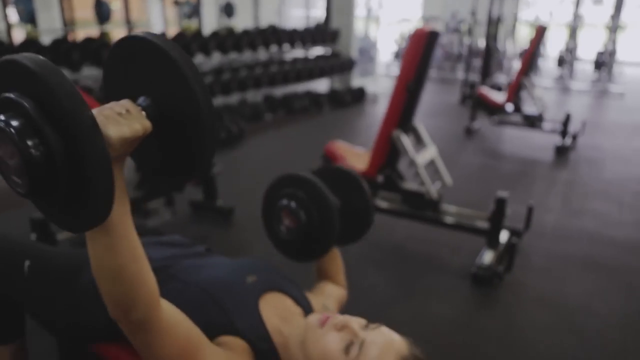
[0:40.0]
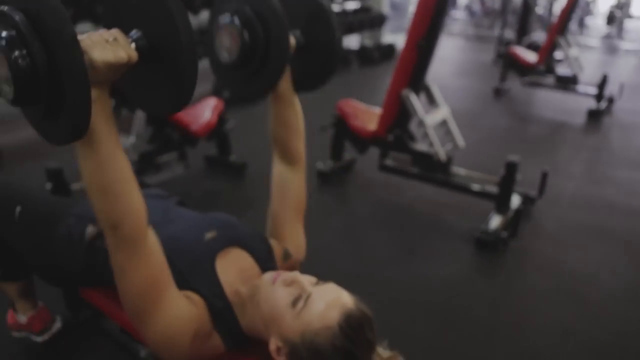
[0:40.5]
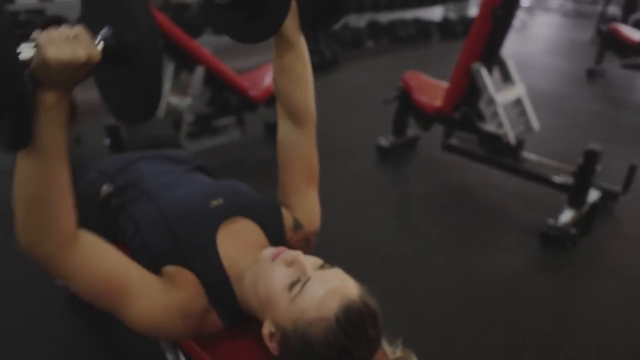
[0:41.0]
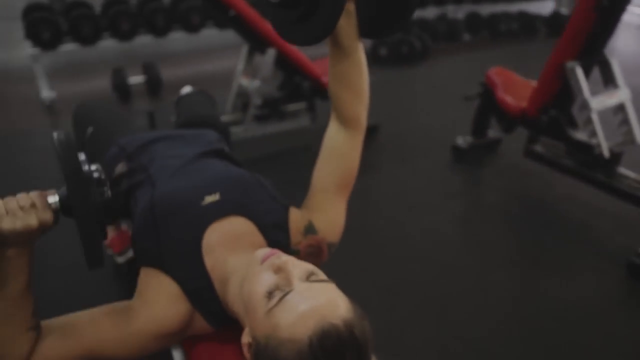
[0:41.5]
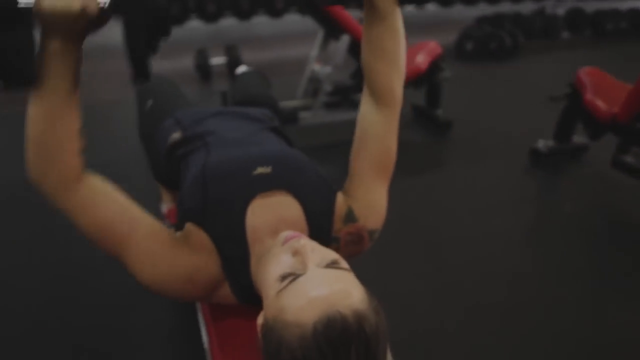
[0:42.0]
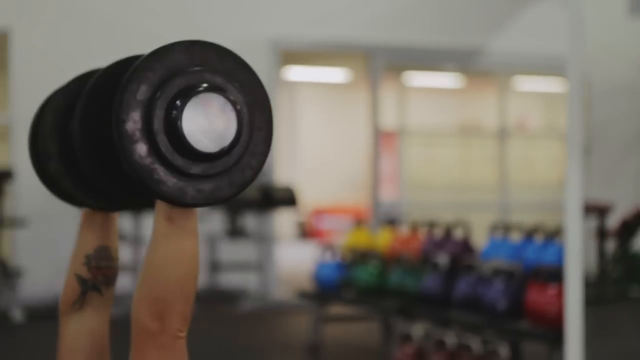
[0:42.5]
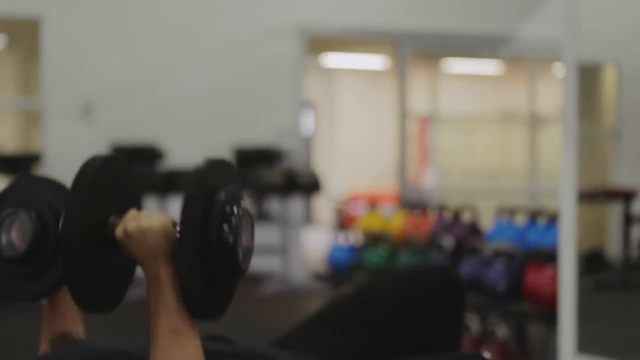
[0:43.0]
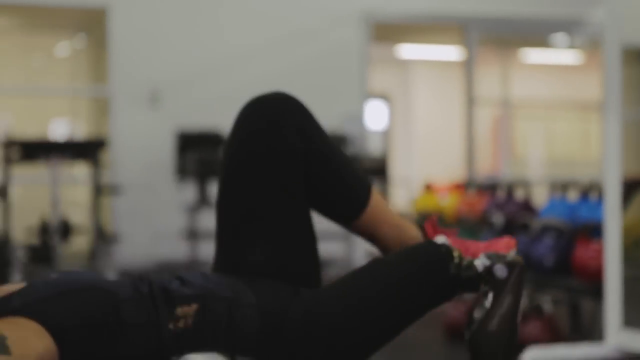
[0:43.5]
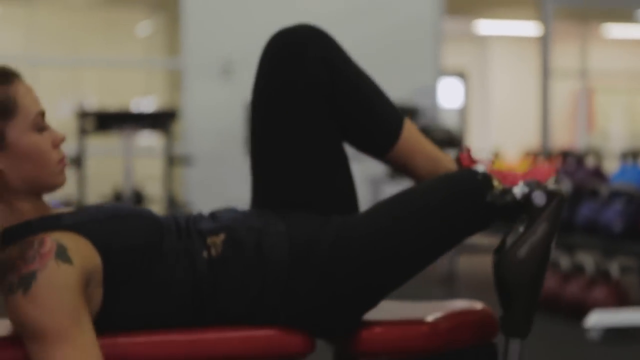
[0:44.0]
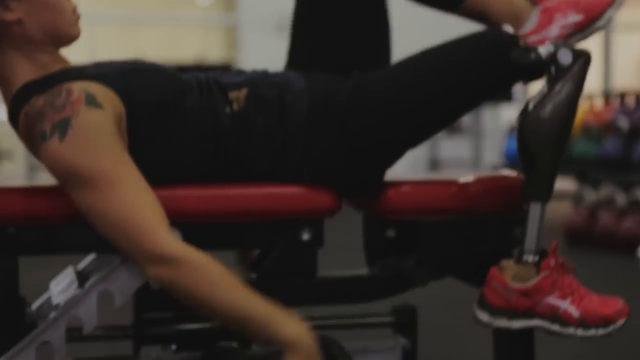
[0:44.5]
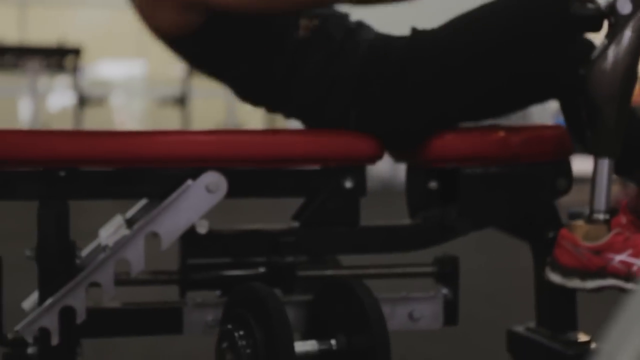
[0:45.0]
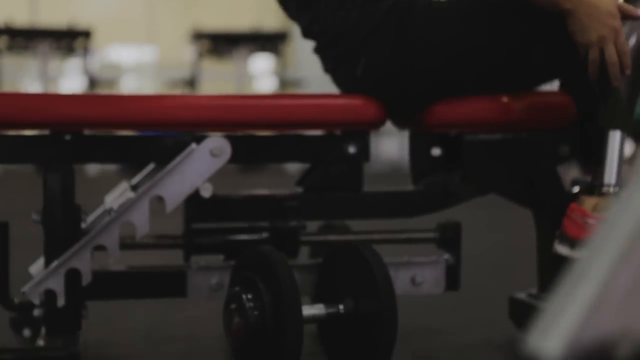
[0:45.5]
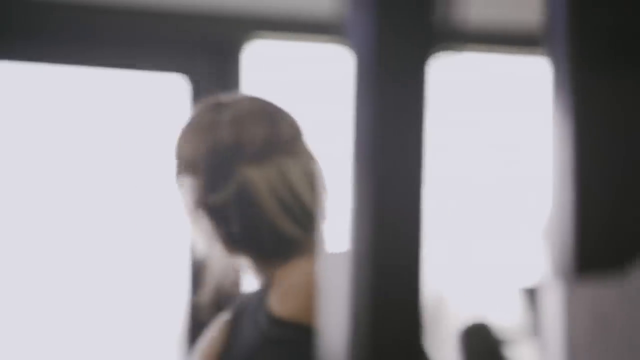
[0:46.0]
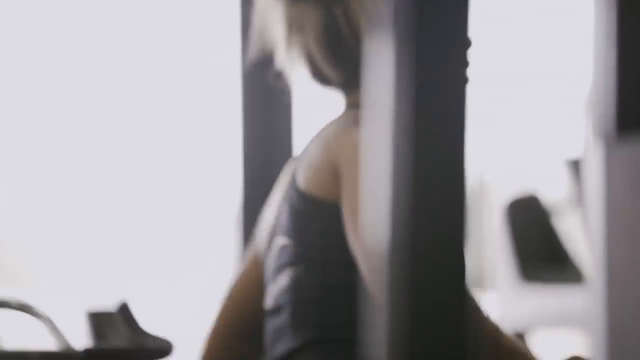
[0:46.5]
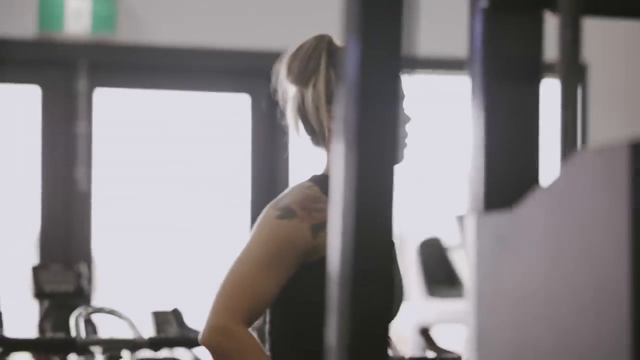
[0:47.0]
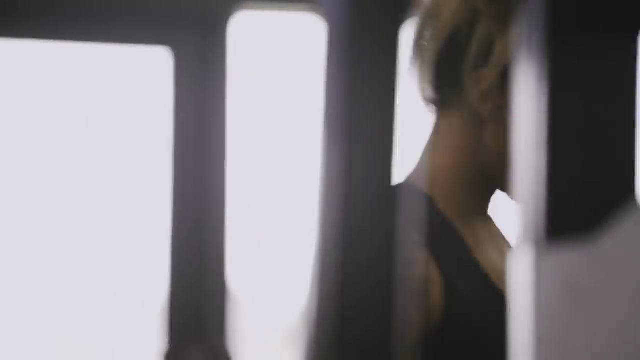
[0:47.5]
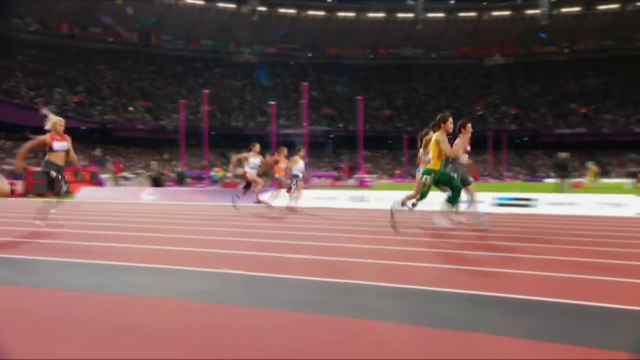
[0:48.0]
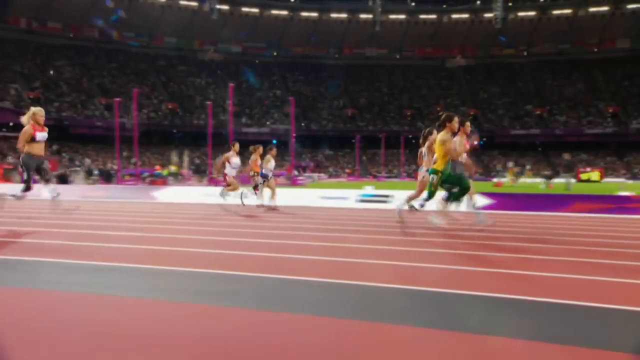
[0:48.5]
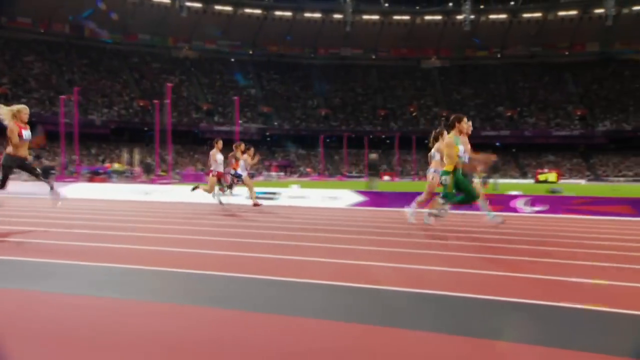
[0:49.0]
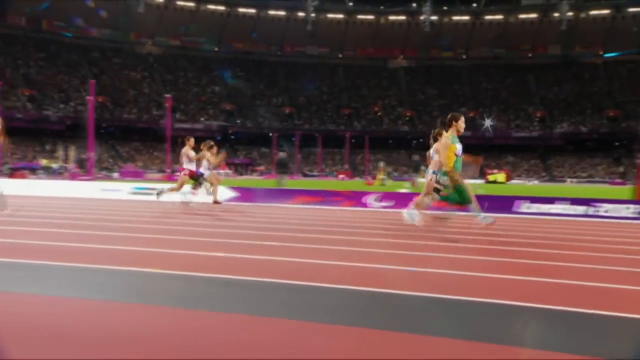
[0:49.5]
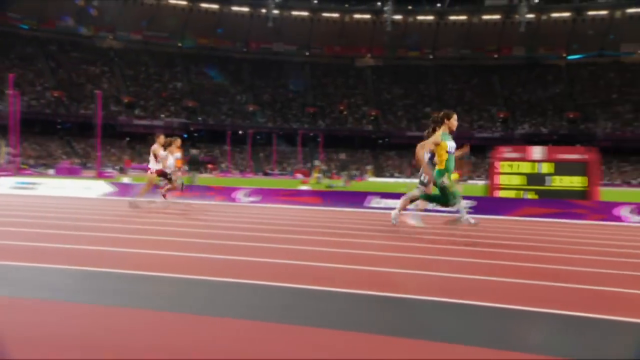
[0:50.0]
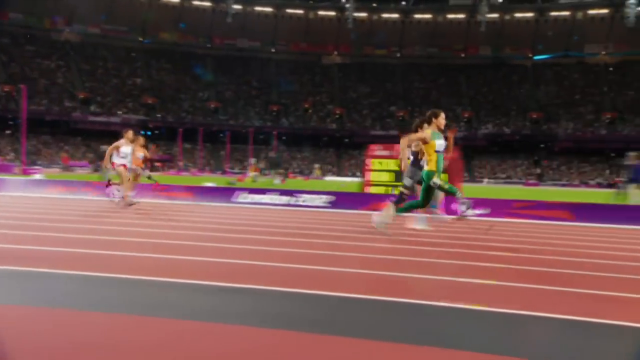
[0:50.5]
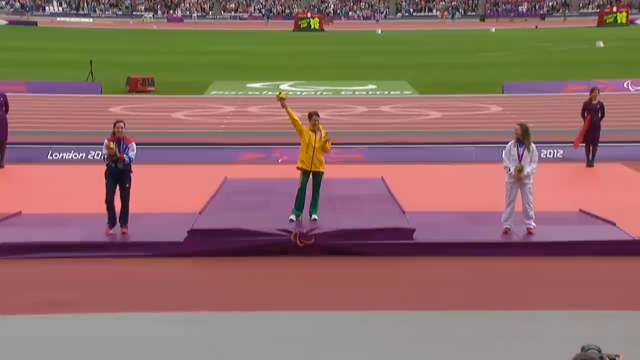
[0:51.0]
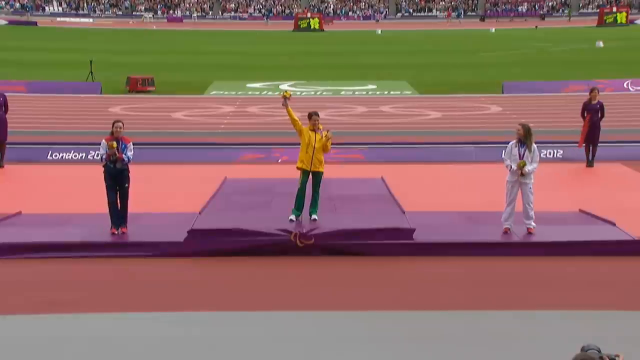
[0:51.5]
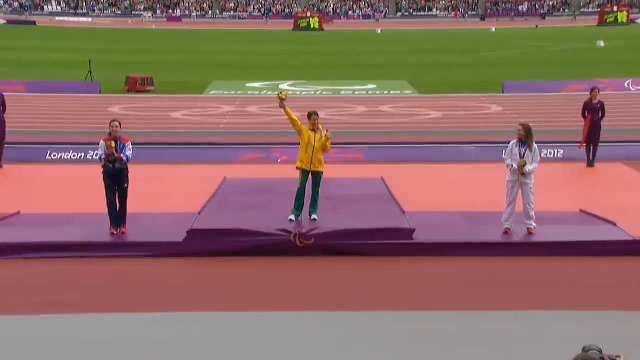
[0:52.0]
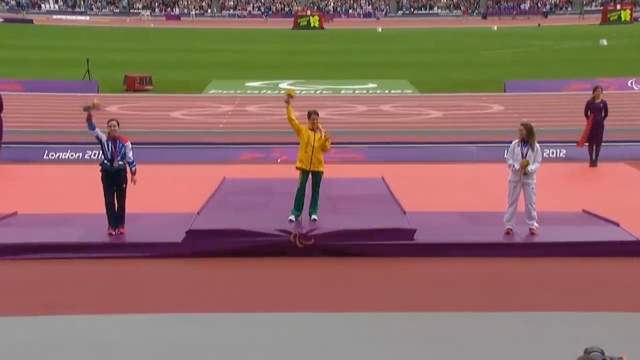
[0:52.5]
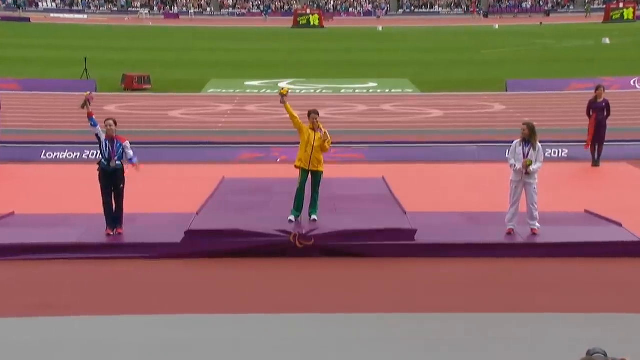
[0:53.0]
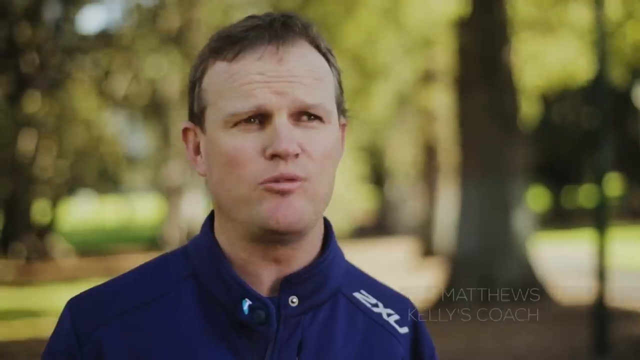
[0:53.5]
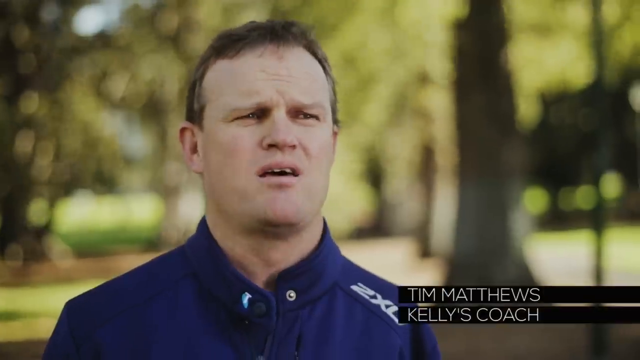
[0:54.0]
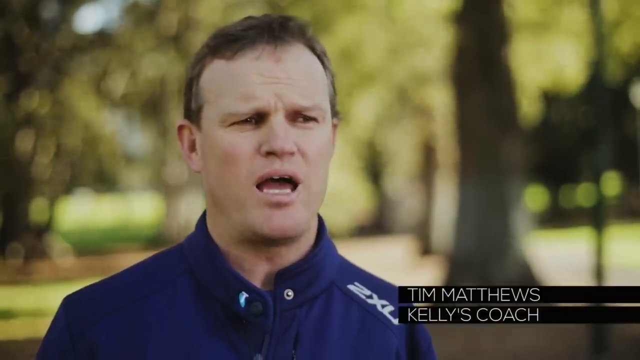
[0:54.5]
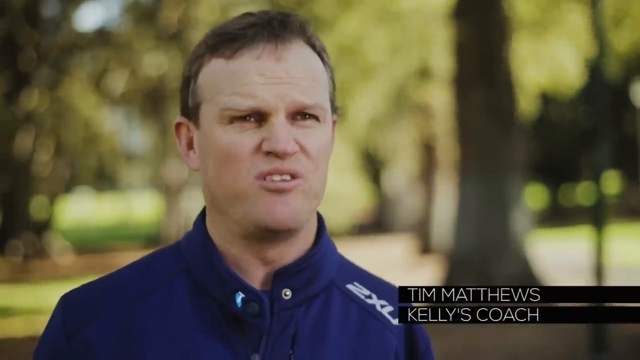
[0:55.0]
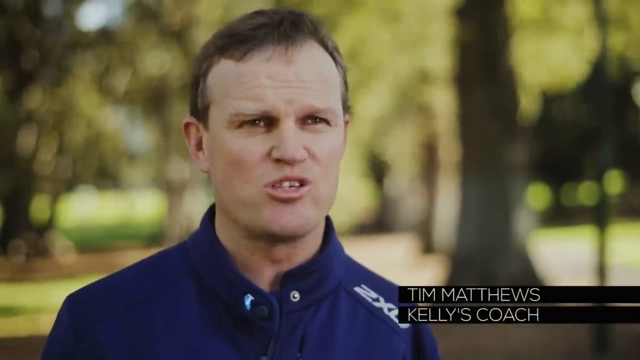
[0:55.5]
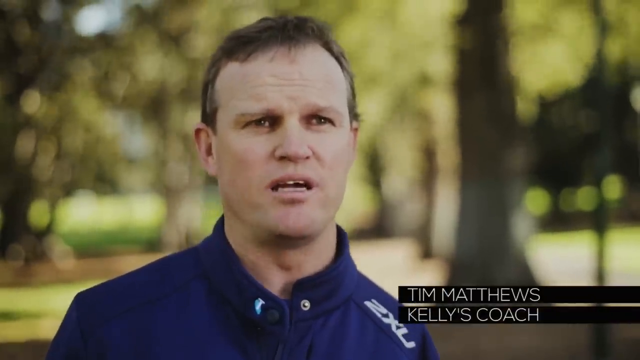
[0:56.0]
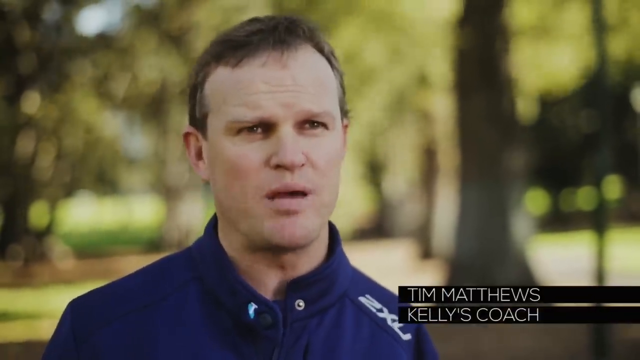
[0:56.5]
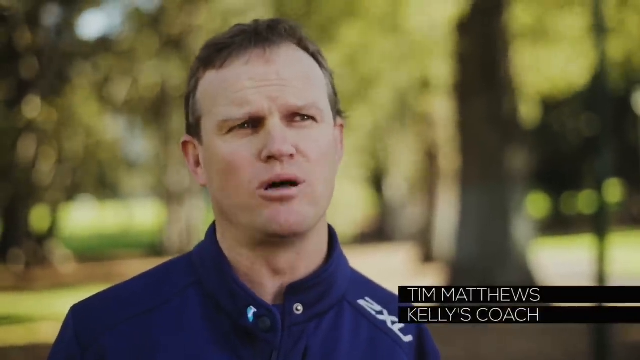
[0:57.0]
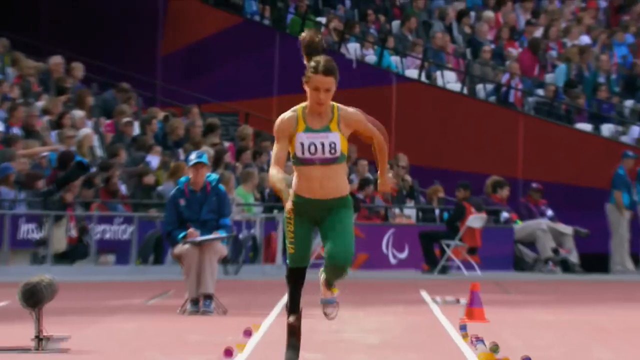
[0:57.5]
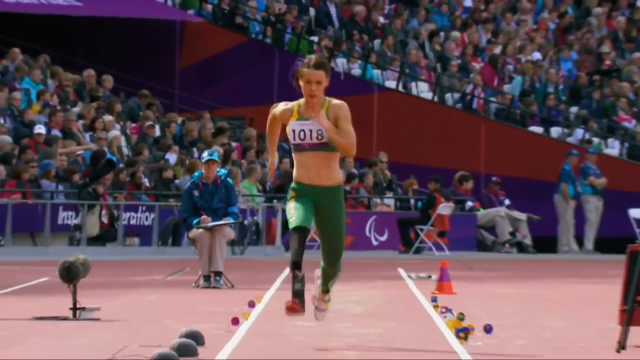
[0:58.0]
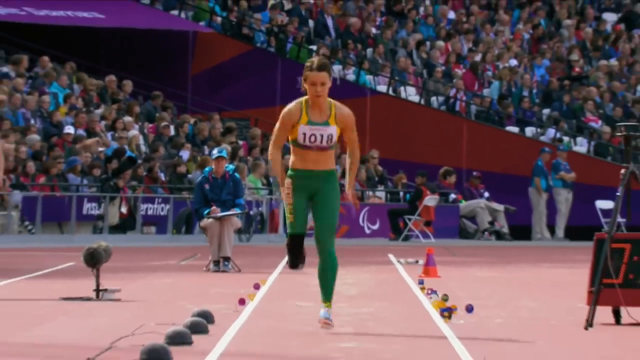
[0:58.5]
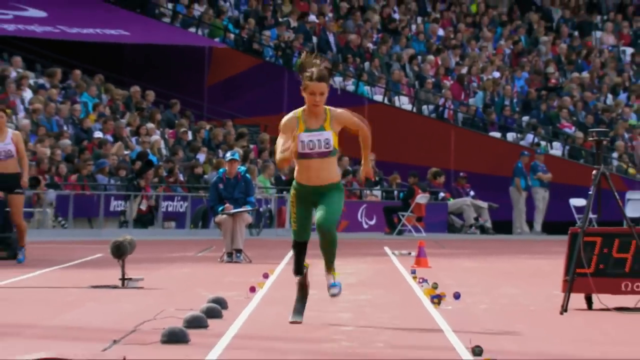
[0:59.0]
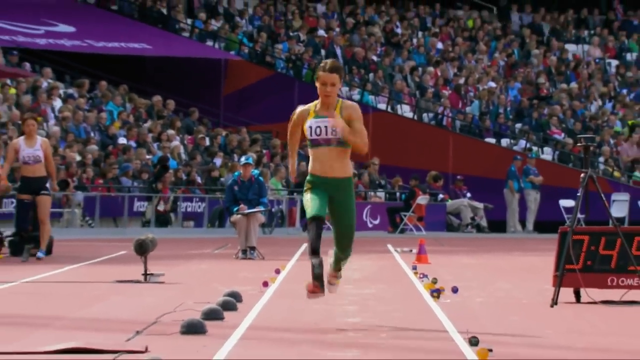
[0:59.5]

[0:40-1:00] A young Paralympic athlete lifts weights in a gymnasium, wearing a prosthetic leg below her right knee. The scene switches to female Paralympic athletes running down a track in a stadium filled with people. Three women then stand on a podium; the woman in the center raises her right arm in victory and holds a bouquet of flowers, and the women appear to have medals around their necks. "London 2012" is on a sign at the edge of the field behind them. Next, a close-up shows a man in a blue athletic jacket speaking to someone behind the camera. He stands outdoors with blurry trees and sunlight behind him, and he is identified in the lower right of the screen as "Tim Matthews, Kelly's coach." He speaks emphatically. Then a female Paralympic athlete wearing a prosthetic device runs down a track, filmed from the front as if running toward the camera.